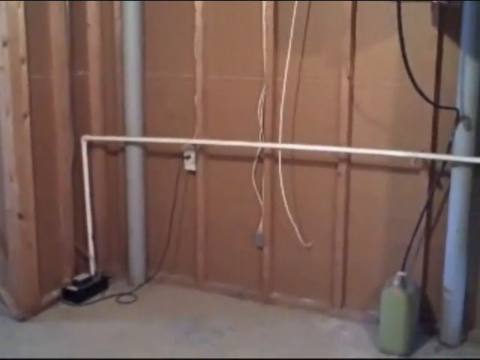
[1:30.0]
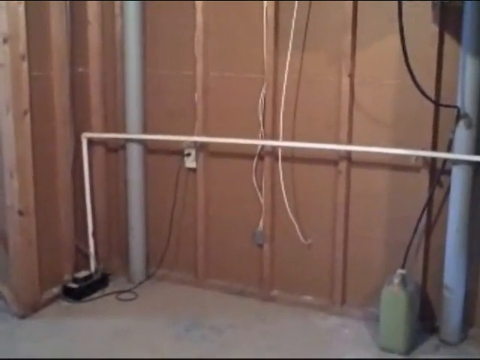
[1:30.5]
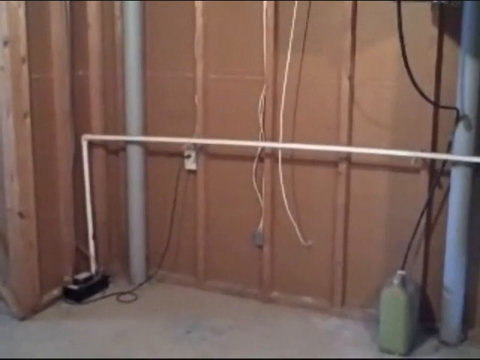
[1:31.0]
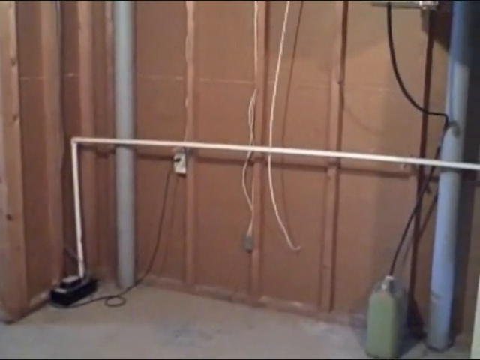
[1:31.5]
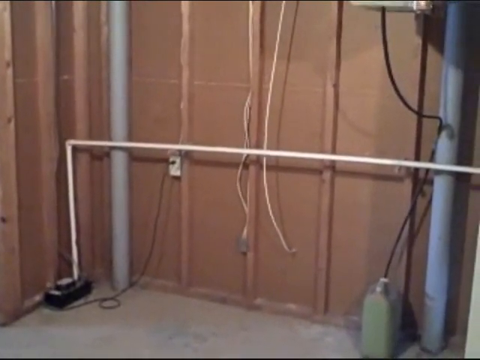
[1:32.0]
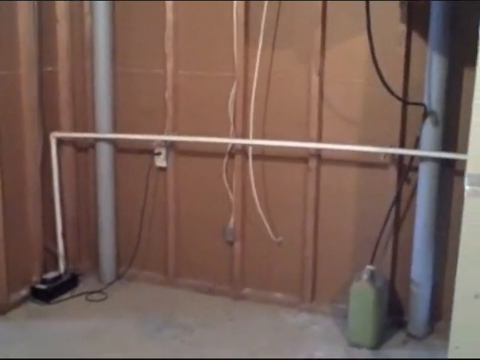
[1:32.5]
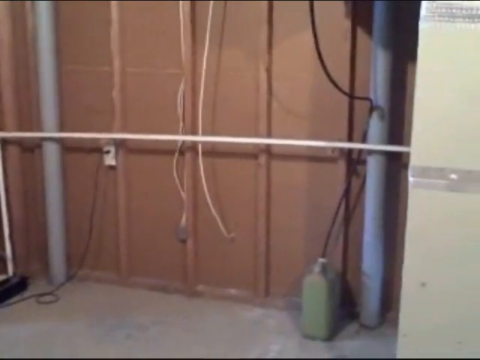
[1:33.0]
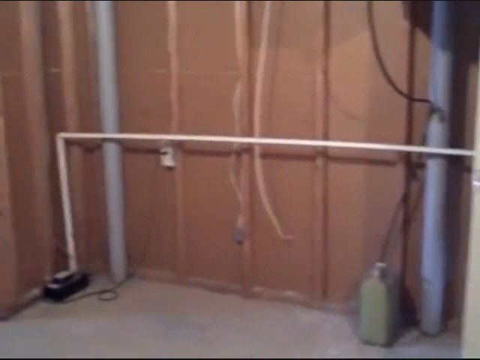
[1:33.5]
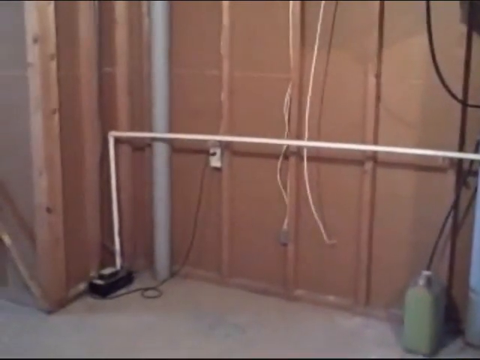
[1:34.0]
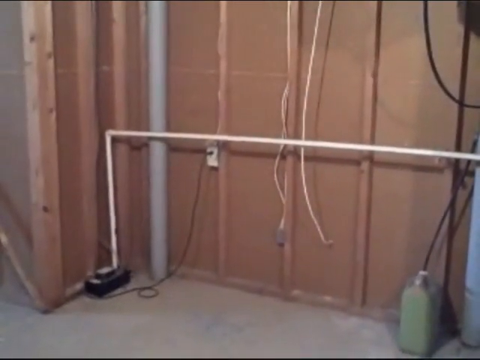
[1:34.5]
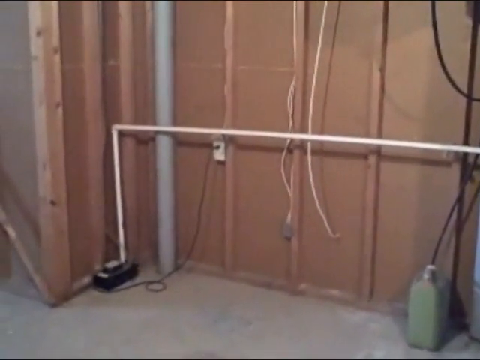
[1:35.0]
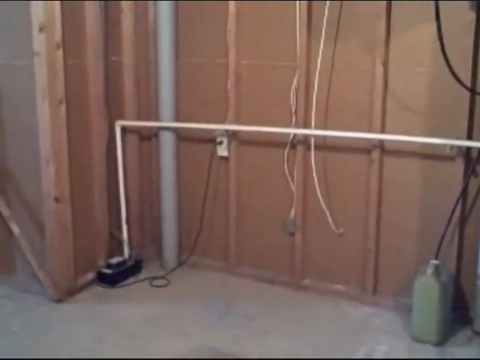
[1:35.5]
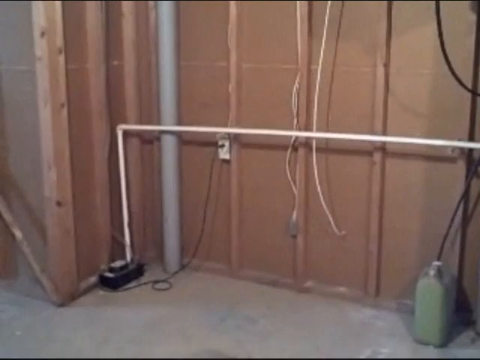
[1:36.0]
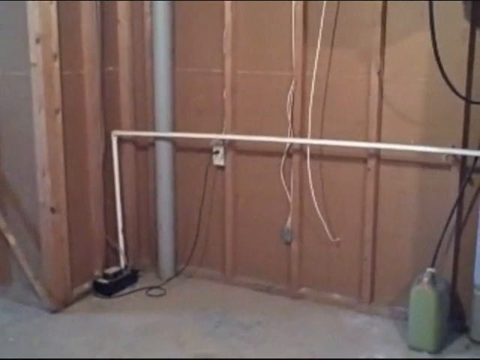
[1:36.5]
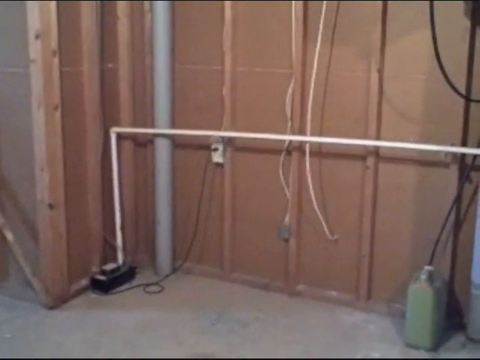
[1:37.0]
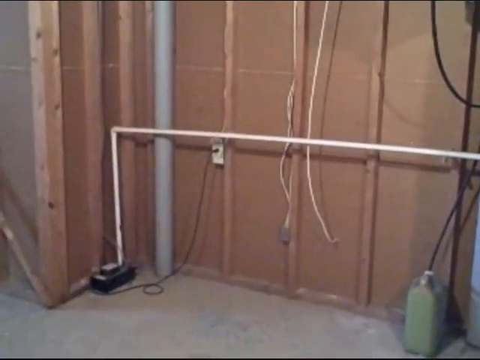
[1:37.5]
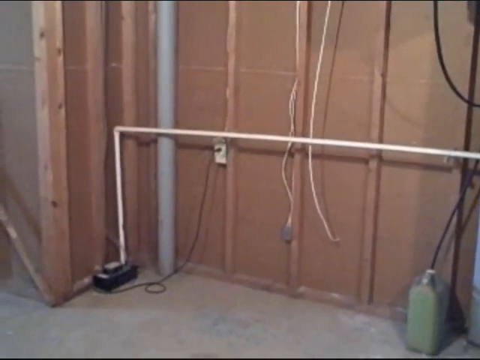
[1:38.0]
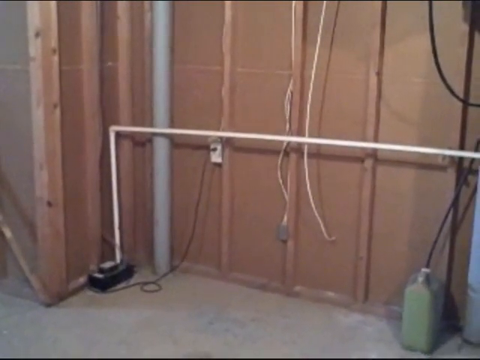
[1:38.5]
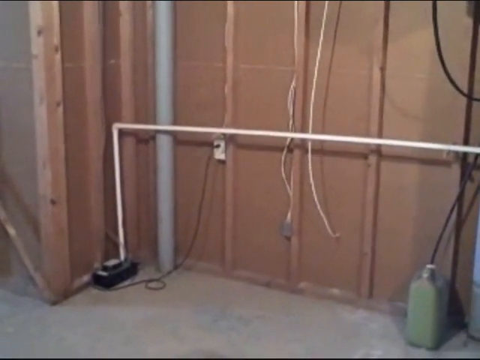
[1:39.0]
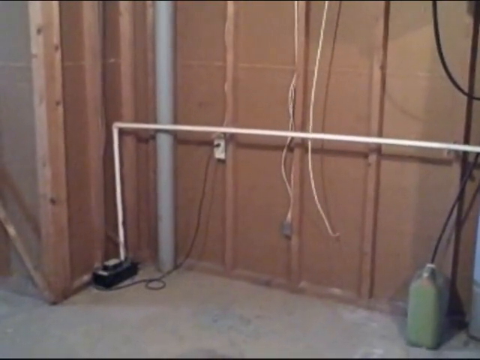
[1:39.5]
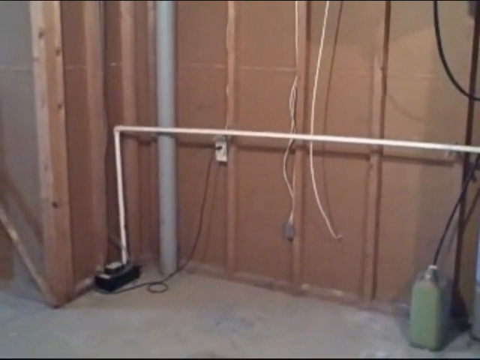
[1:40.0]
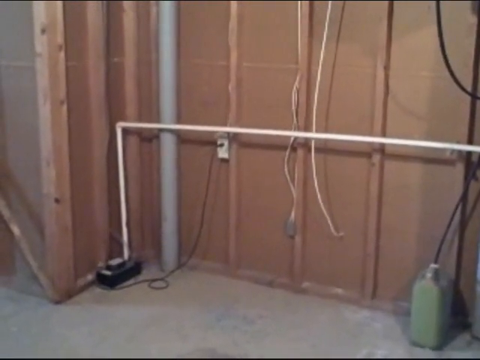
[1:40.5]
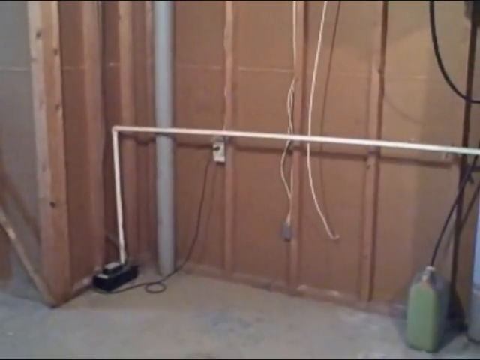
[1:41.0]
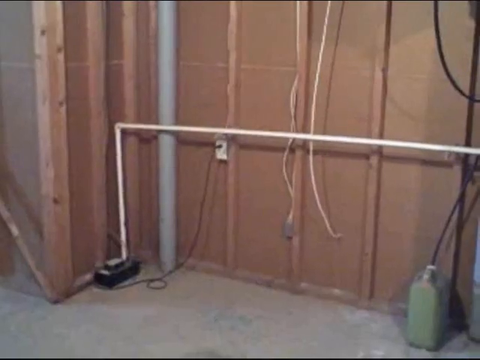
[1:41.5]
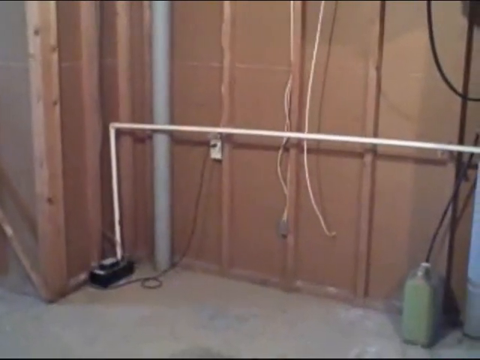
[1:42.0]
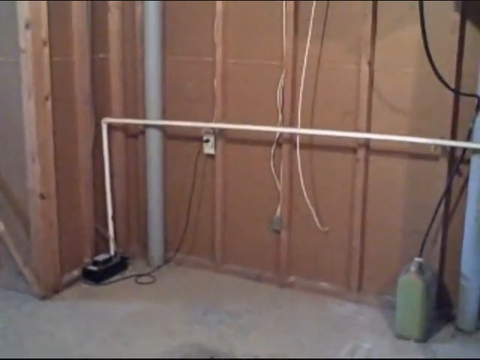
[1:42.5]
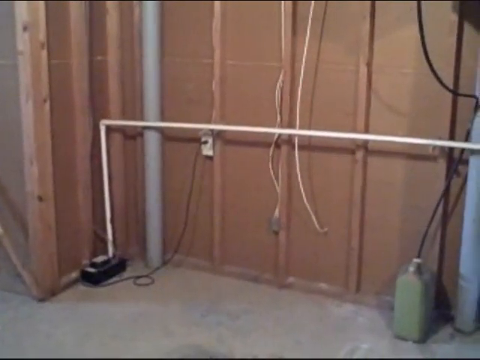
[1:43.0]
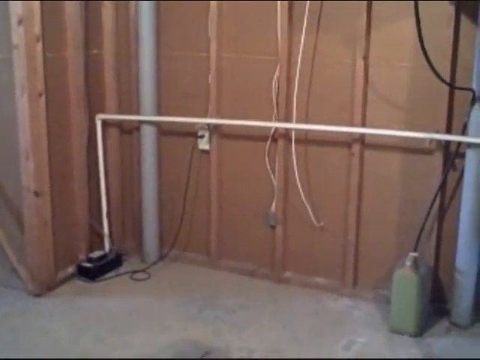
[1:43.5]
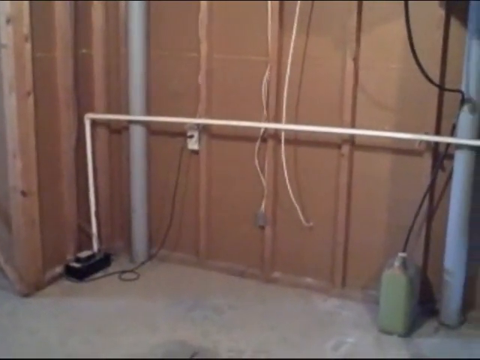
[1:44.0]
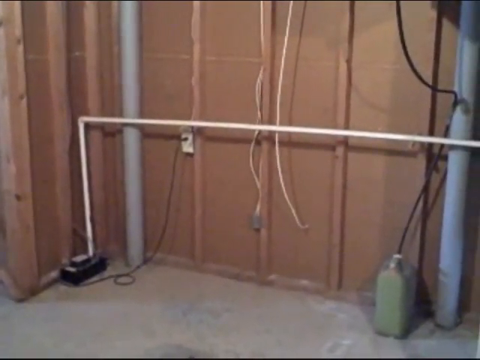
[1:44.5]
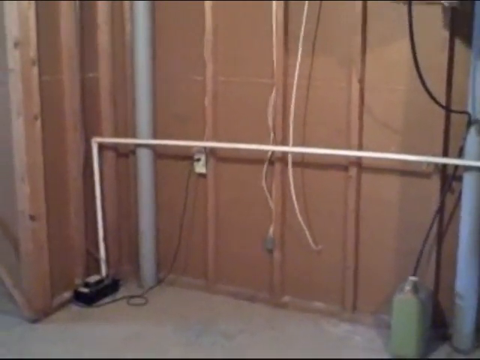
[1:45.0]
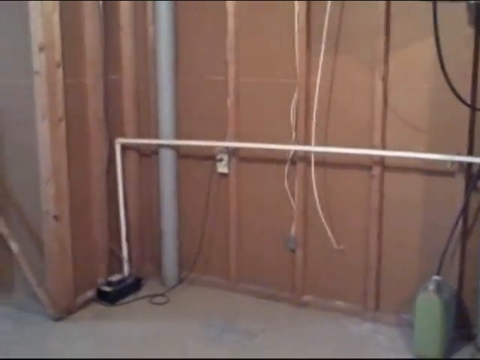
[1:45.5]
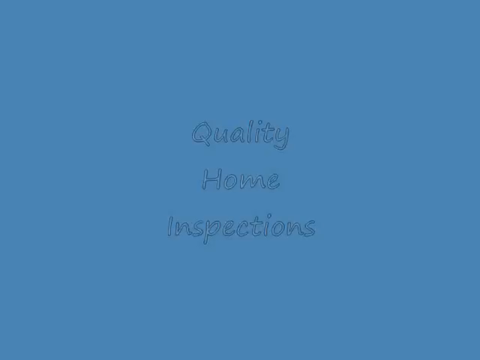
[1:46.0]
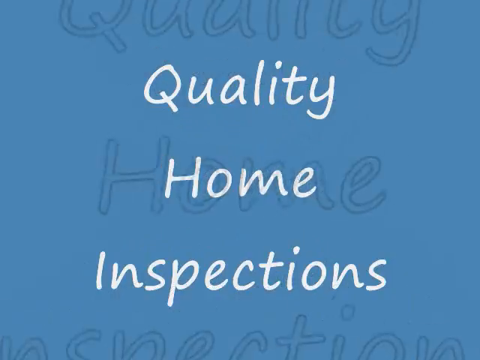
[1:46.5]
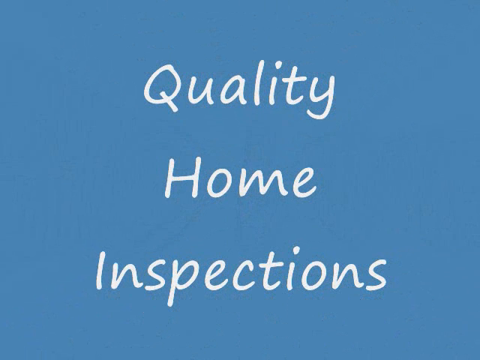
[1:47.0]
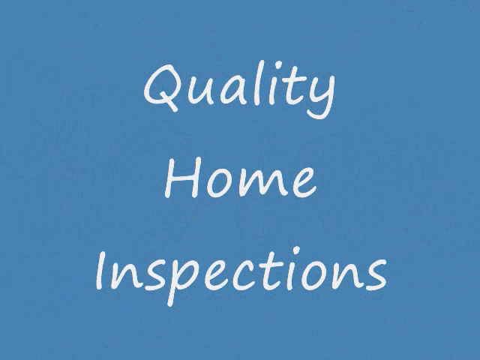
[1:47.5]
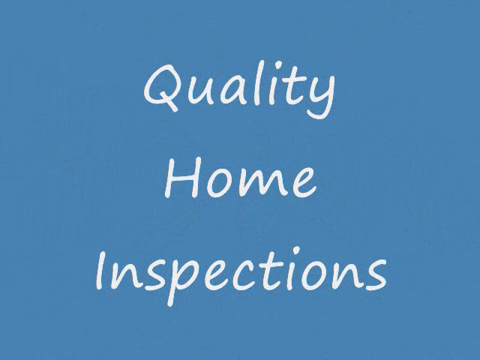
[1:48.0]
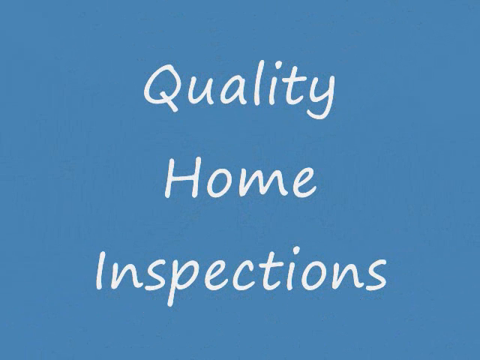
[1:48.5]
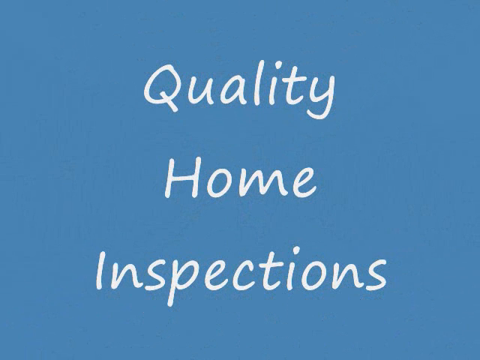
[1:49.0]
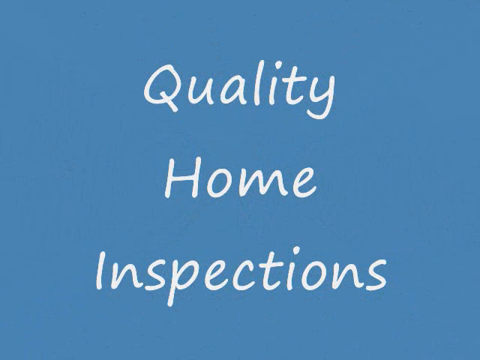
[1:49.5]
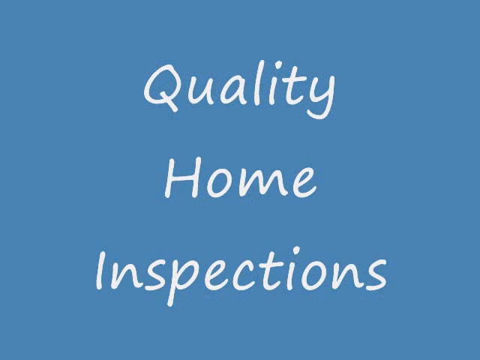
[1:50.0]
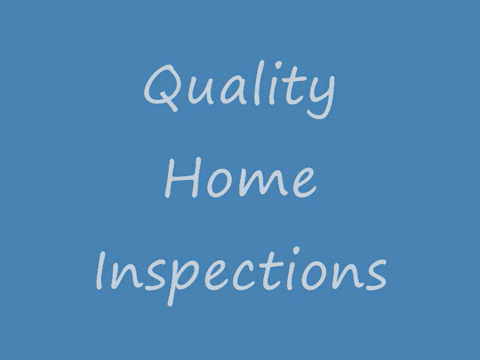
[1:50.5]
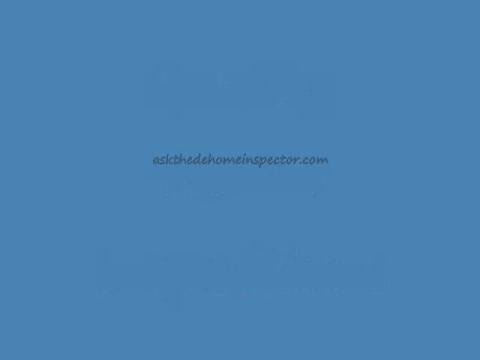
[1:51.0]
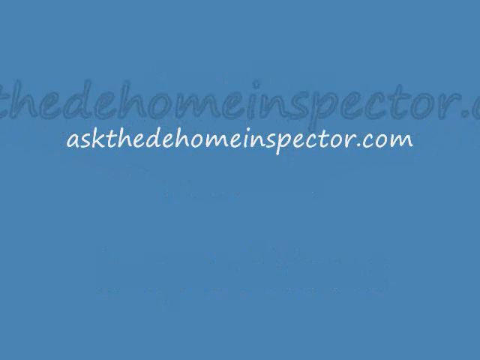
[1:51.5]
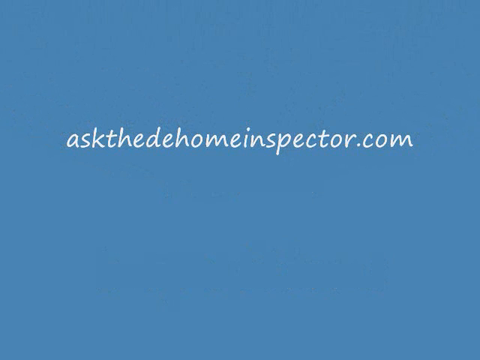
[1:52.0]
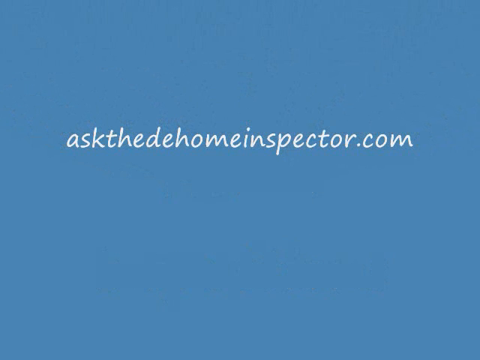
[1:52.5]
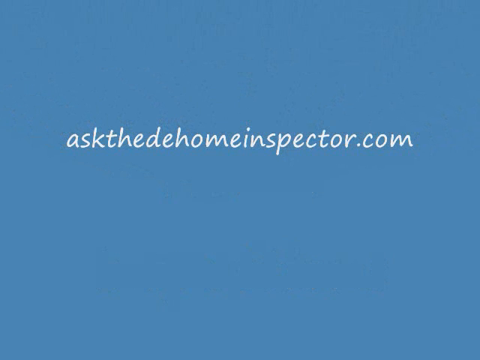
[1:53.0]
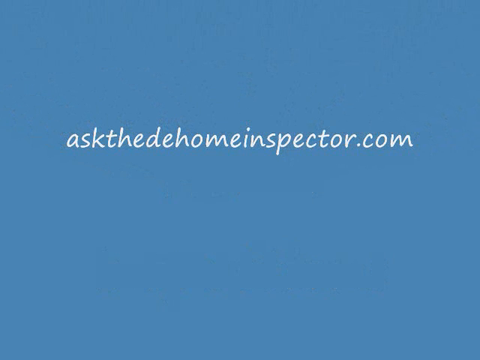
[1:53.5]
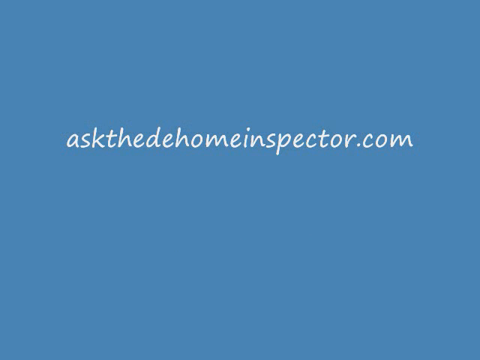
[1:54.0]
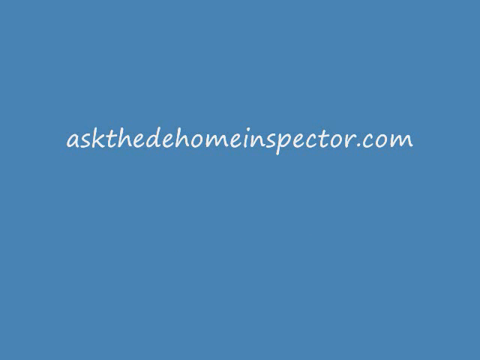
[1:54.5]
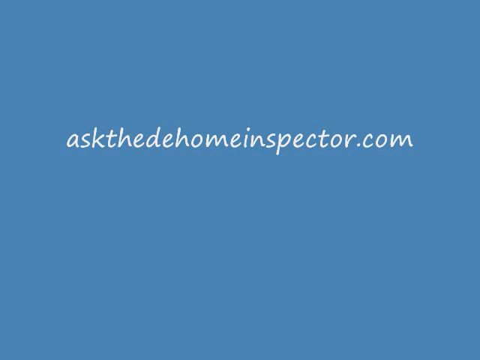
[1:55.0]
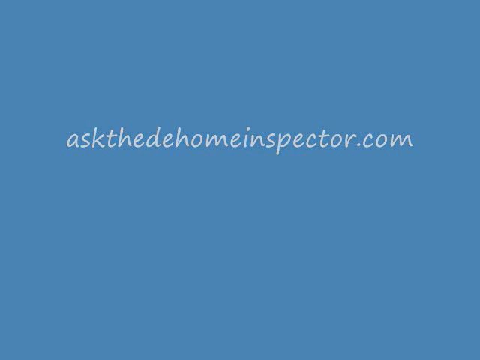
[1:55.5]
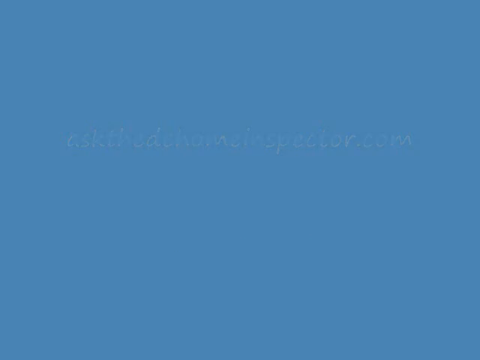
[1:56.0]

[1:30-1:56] A man apparently inspecting a home films the basement of the house, which has pipes, cut wires, a green box apparently connected to some sort of box, and a plug next to the pipelines of the water system. The room looks like an old basement. He moves the camera to show what the sides look like and the poles. Not the full basement is shown; there is some cardboard and a floor with no tiles, apparently an old basement.